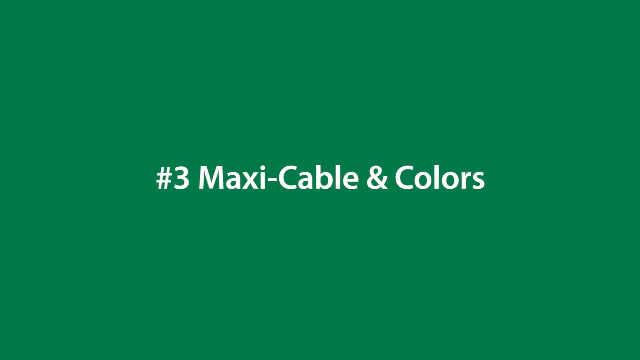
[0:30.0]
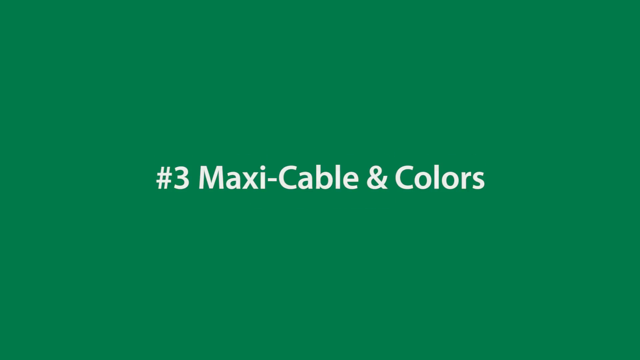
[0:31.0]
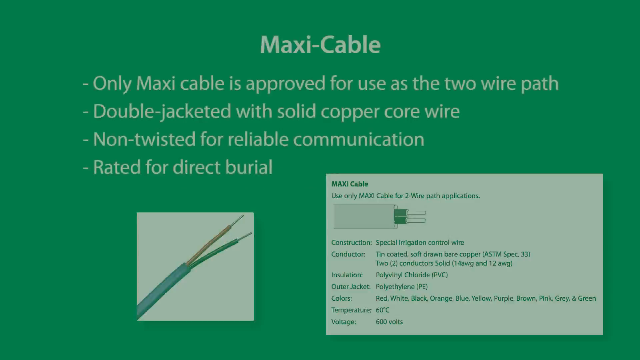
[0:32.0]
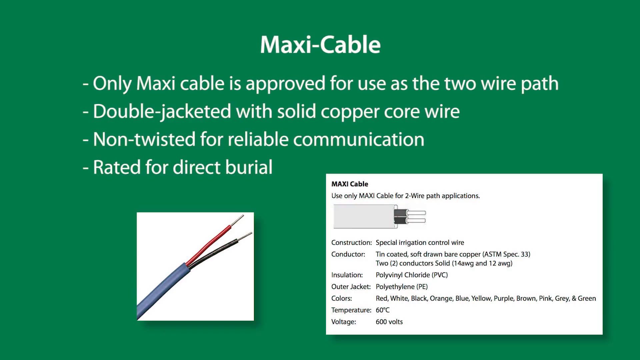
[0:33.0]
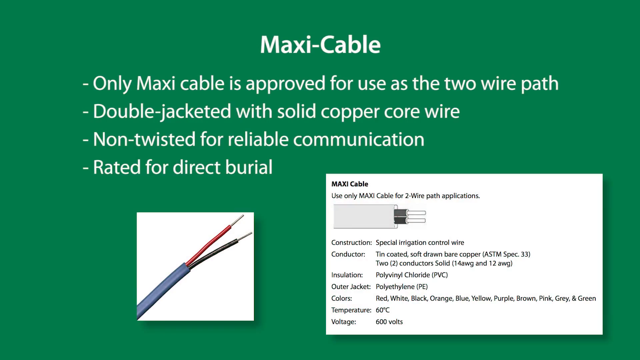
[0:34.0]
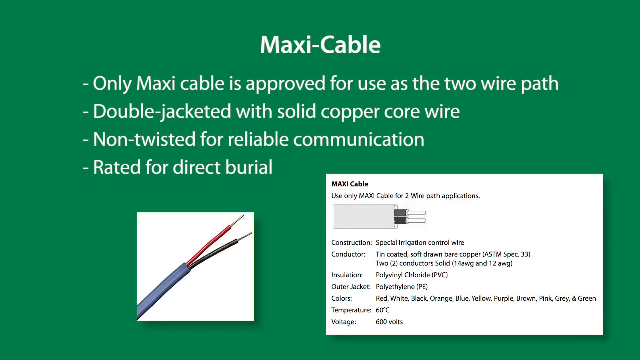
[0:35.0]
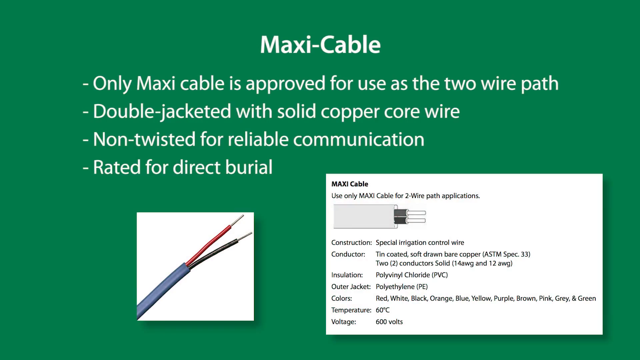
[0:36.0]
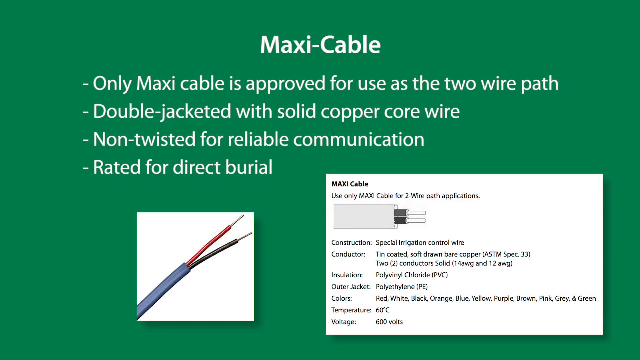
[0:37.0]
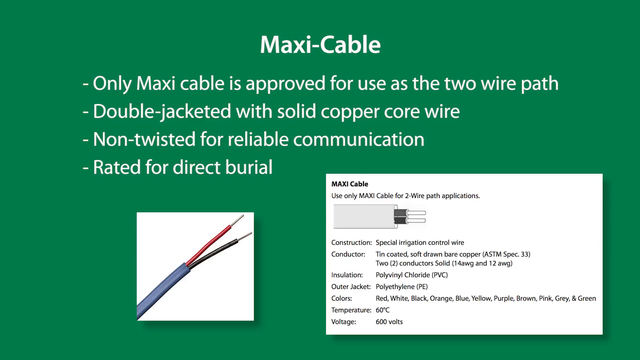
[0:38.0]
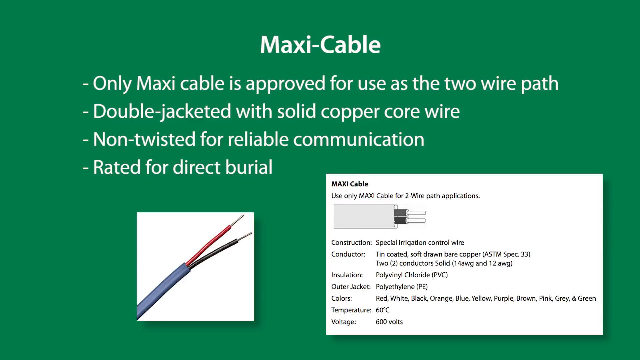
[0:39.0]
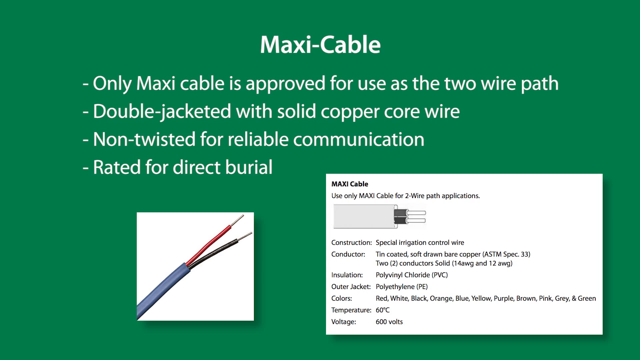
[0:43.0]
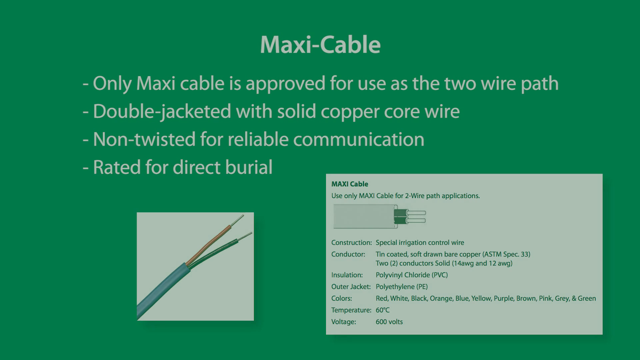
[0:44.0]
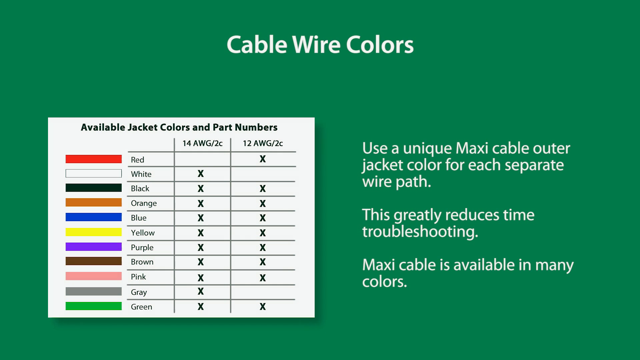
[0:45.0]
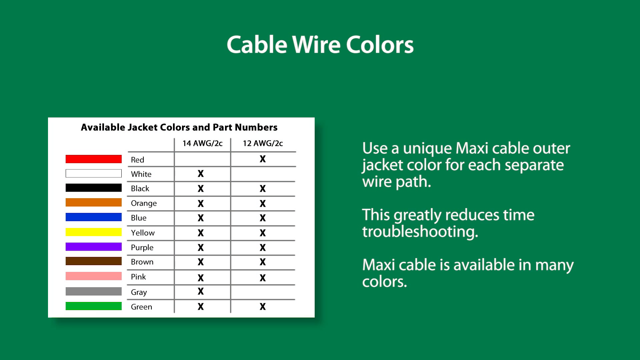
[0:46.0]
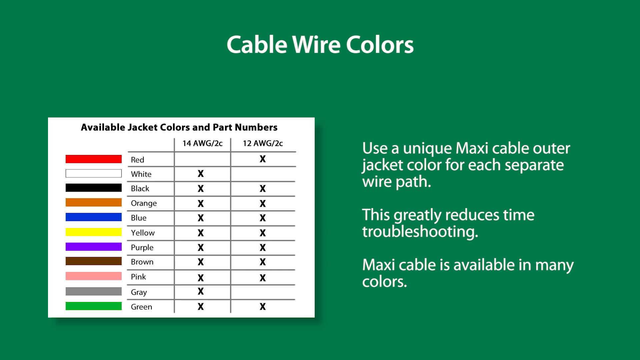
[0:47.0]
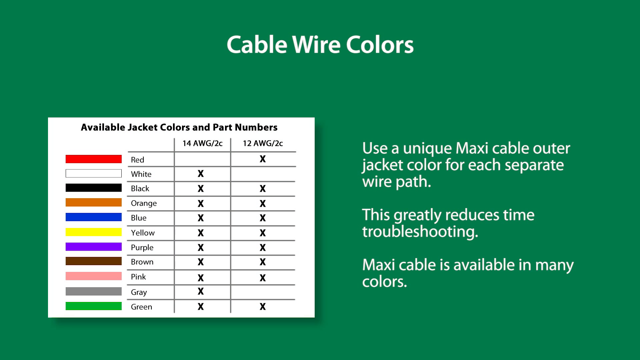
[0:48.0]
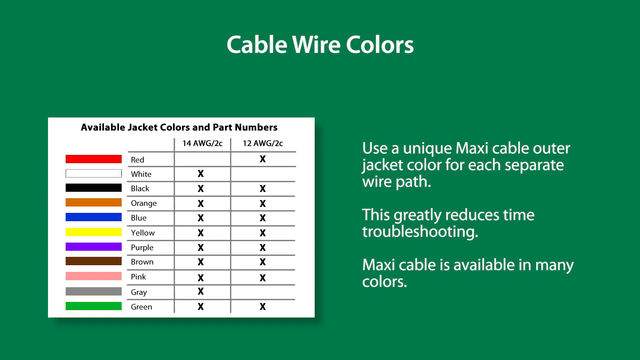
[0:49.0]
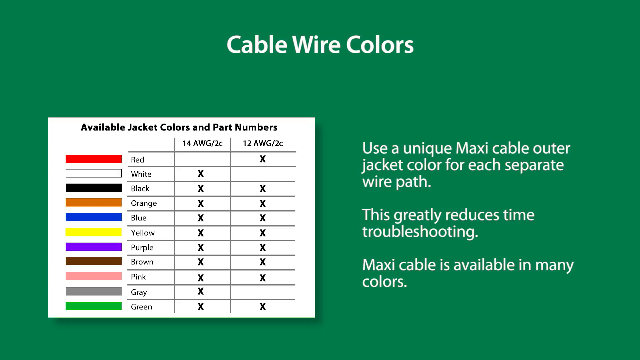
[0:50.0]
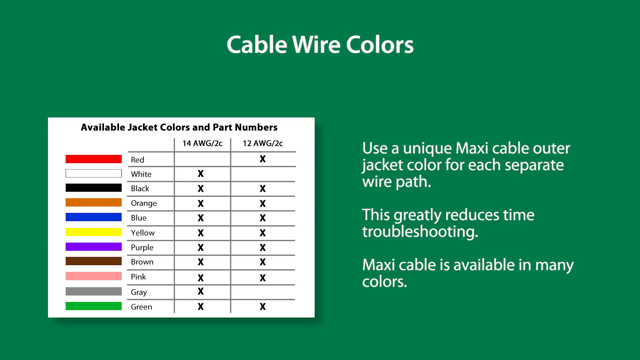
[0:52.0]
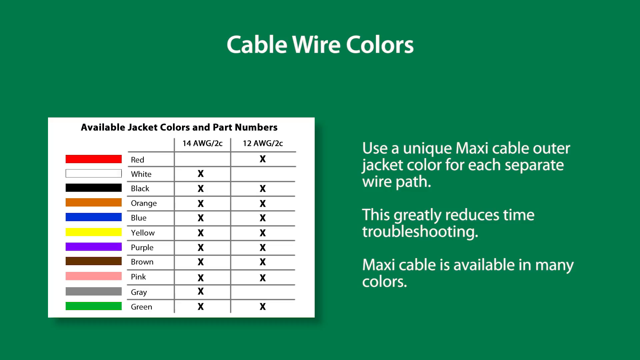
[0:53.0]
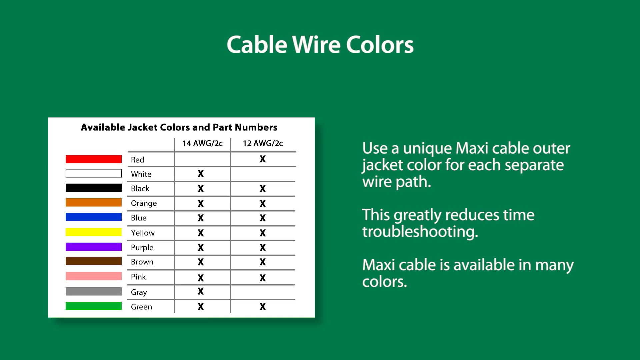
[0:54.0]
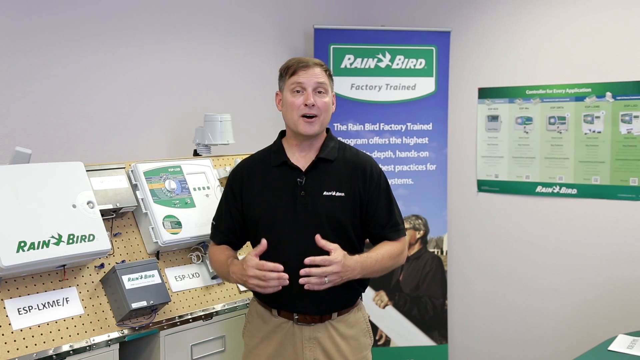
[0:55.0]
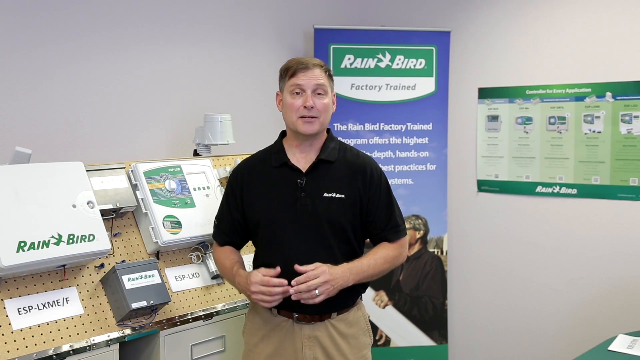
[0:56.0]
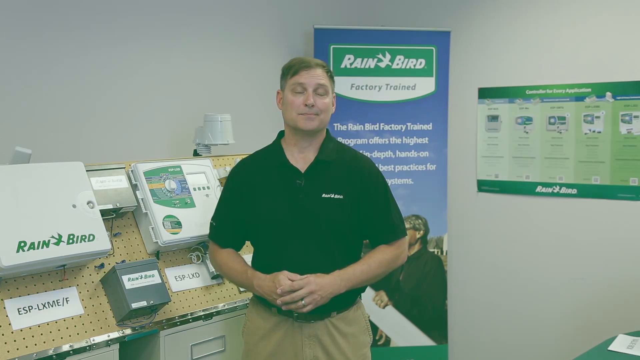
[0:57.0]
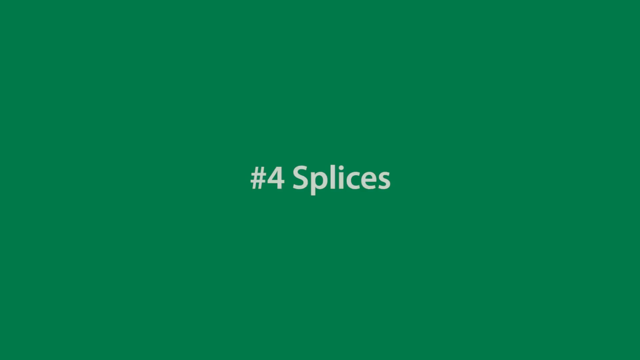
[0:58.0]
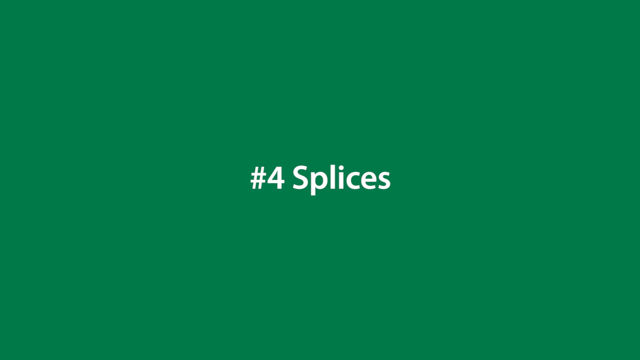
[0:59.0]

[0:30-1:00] A green background shows white text reading "number 3, Maxi Cable and Colors." A new text card follows with the title "Maxi Cable" and four points: "only Maxi Cable is approved for use as the two-wire path," "double-jacketed with solid copper core wire," "non-twisted for reliable communication," and "rated for direct burial." Below the text is an image of a wire wrapped in blue sheathing, with a smaller red wire coming out that has copper at its tip, and a black wire that also has copper showing at its tip. The next image on the page says "Maxi Cable. Use only Maxi Cable for two-wire path applications," with a black-and-white image of a wire showing cables coming out with copper on the ends. Specification text lists "construction: special irrigation control wire," "conductor: tin-coated, soft, strong, bare, copper," "conductors: 2, solid (14 AWG and 12 AWG)," "insulation: polyvinyl chloride (PVC)," "outer jacket: polyethylene (PE)," "colors: red, white, black, orange, blue, yellow, purple, brown, pink, gray, and green," "temperature: 60 degrees," and "voltage: 600 volts." Next, a screen on a green-black background reads "cable wire colors" and shows a chart of available jacket colors and part numbers. The columns list the colors, their names, a "14AWG2C" column and a "12AWG2C" column indicating whether each color comes with that wire. The colors are red, white, black, orange, blue, yellow, purple, brown, pink, gray and green; every color is checked under 14 except red, and every color is checked under 12 except white and gray. A man then speaks, standing in front of a light background wall with advertisements on it. He wears khaki-colored pants, a brown belt, and a black shirt with white writing that says "Rain Bird" with the bird-in-flight logo. Behind him are two photos. The first, about two feet wide and six feet tall, says "Rain Bird" on a green background, with a white background below reading "factory trained" and partly readable text: "the Rain Bird factory trained program offers the highest in depth hands-on best practices for systems." In that photo a person wearing a black jacket holds schematics in their left hand. The other photo appears to show five control panels. There is also a corkboard with various machines on it, four of them visible, which appear to be control panels for an irrigation system, and a device that appears like a lamp, perhaps with a lampshade, attached to the back of the corkboard. A screen then comes up reading "number 4 splices."